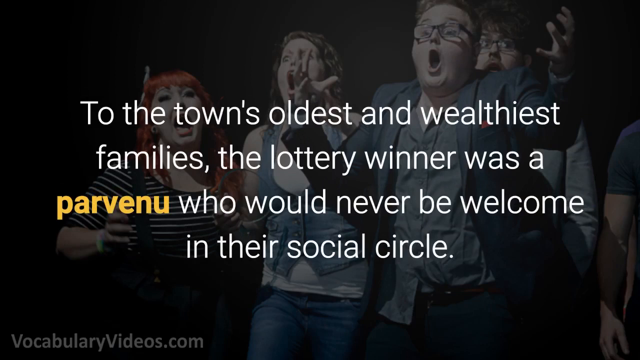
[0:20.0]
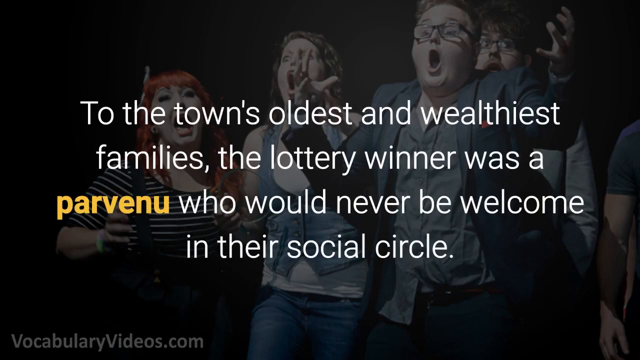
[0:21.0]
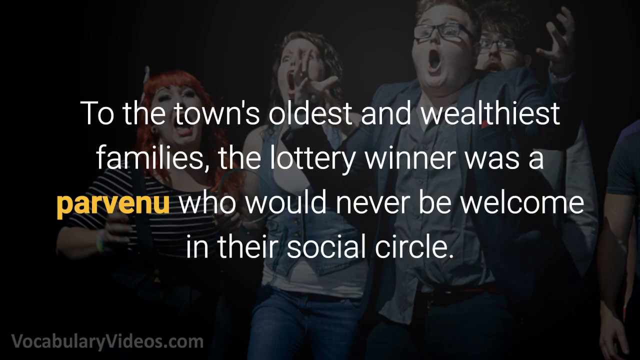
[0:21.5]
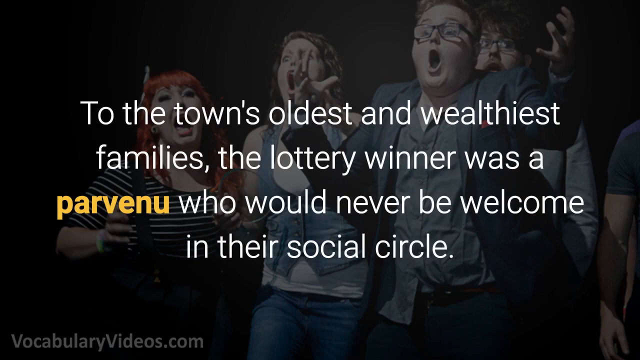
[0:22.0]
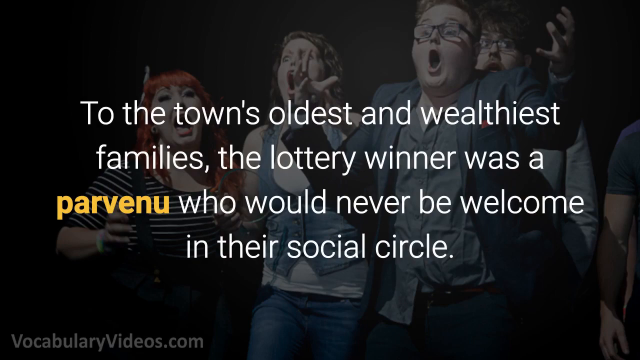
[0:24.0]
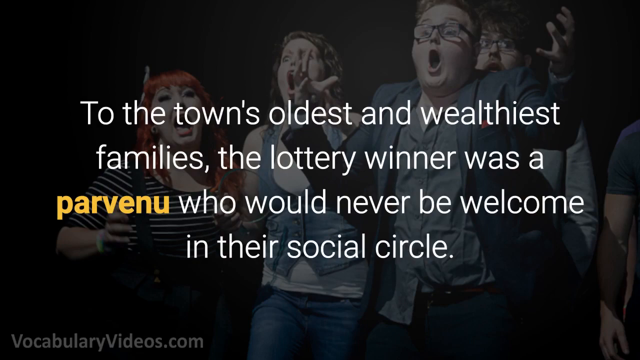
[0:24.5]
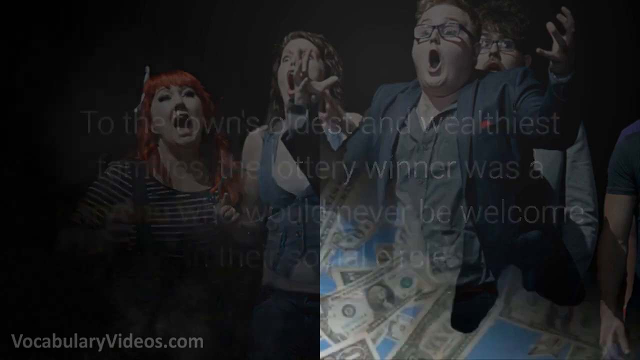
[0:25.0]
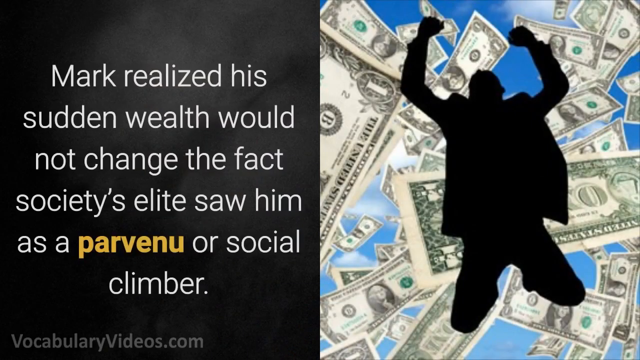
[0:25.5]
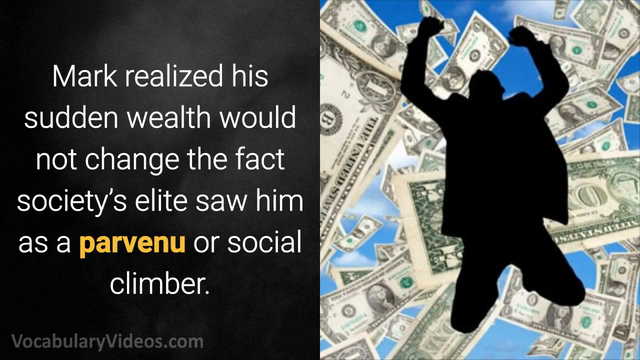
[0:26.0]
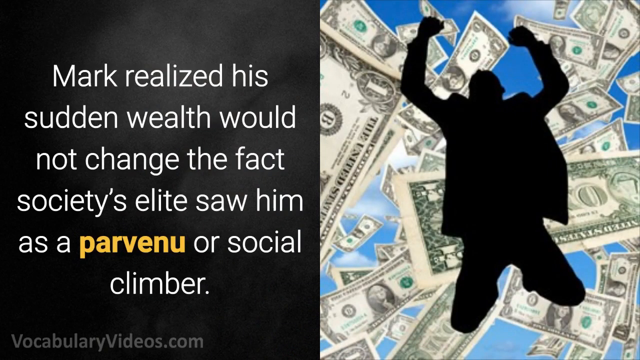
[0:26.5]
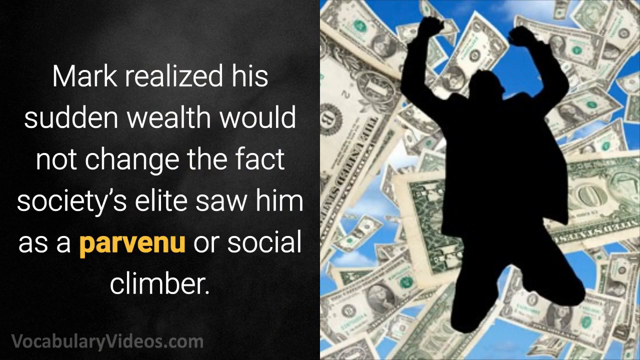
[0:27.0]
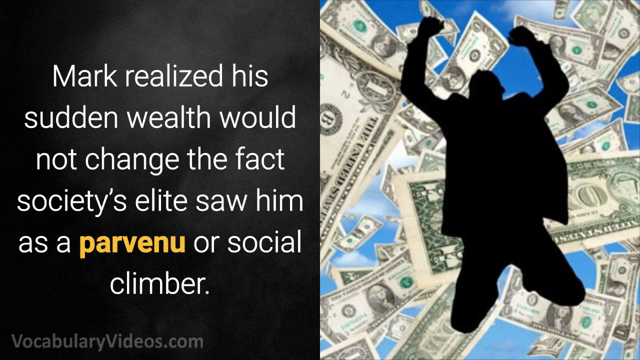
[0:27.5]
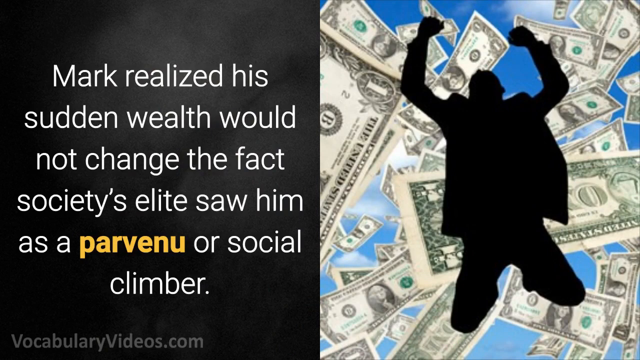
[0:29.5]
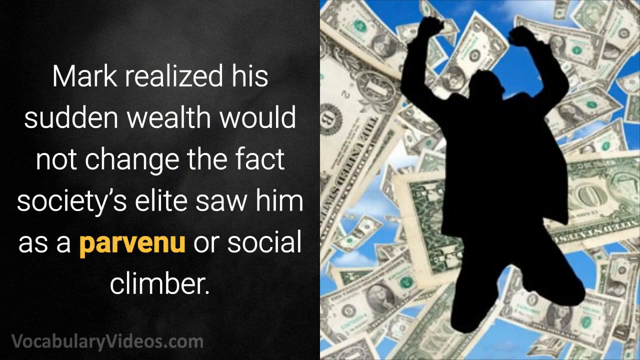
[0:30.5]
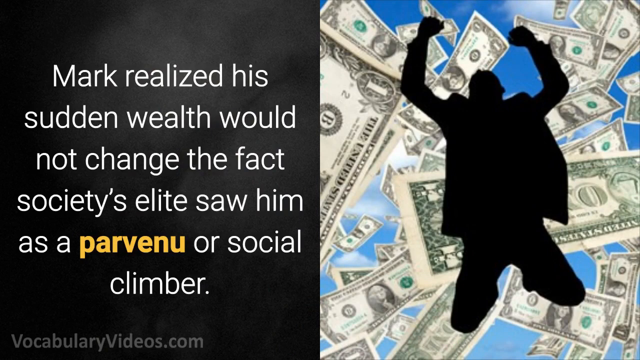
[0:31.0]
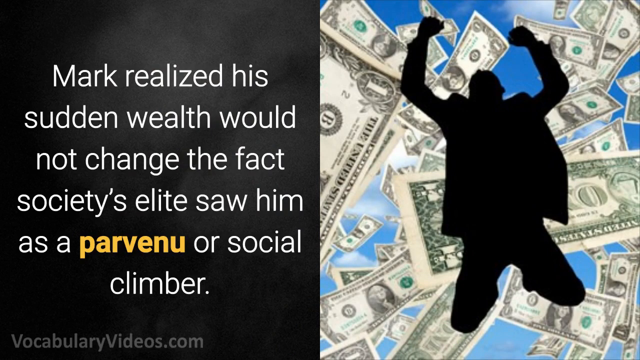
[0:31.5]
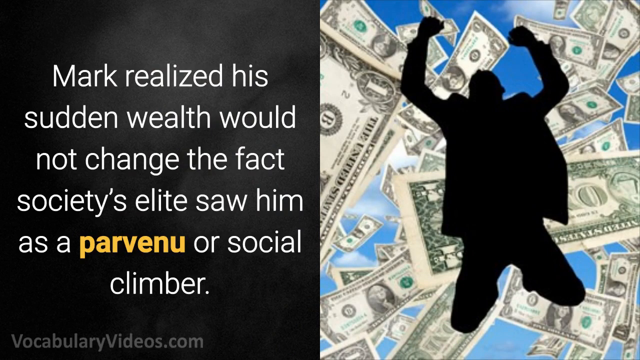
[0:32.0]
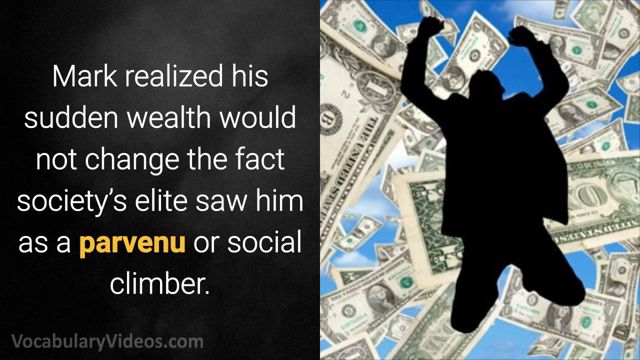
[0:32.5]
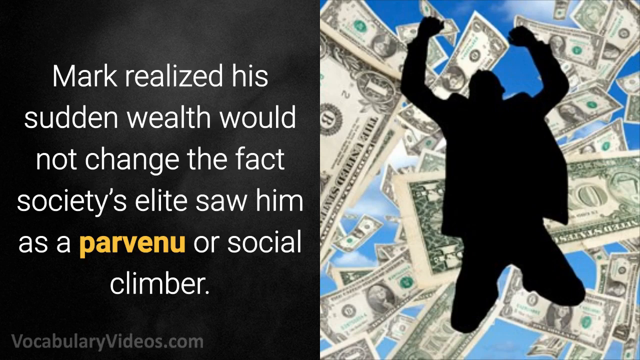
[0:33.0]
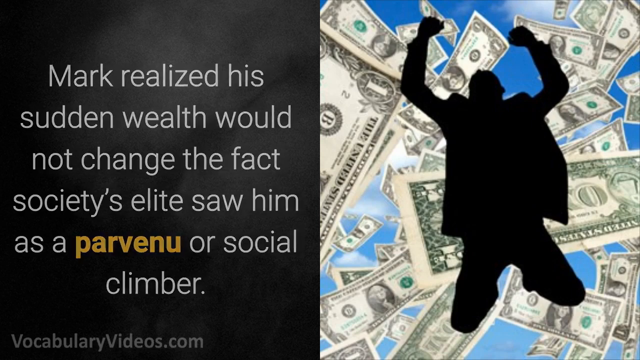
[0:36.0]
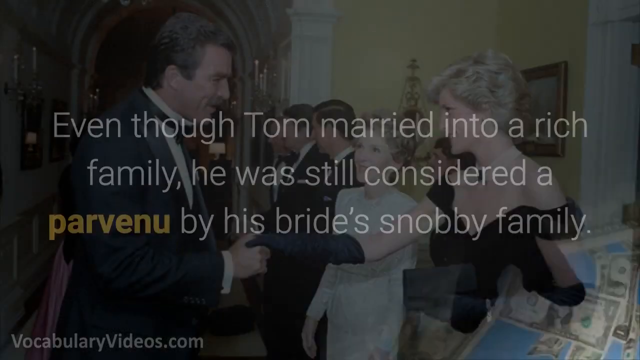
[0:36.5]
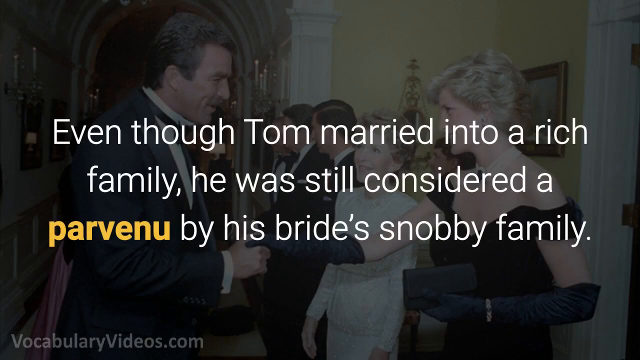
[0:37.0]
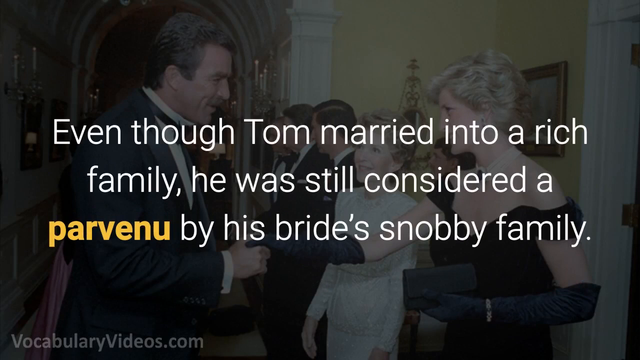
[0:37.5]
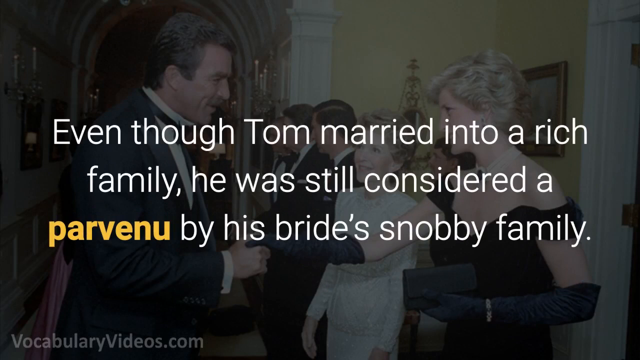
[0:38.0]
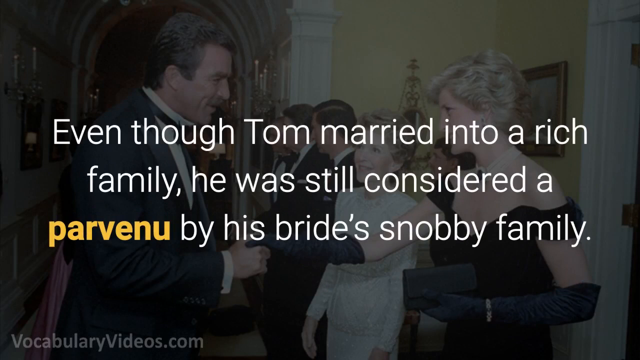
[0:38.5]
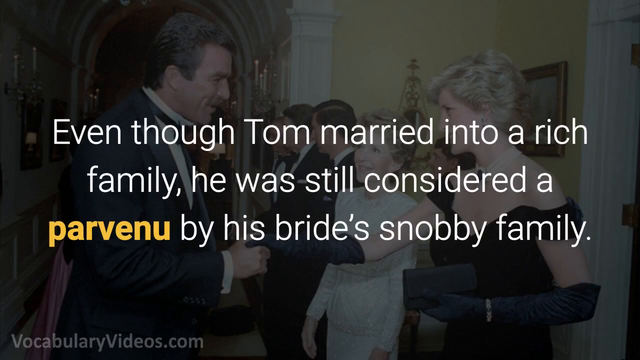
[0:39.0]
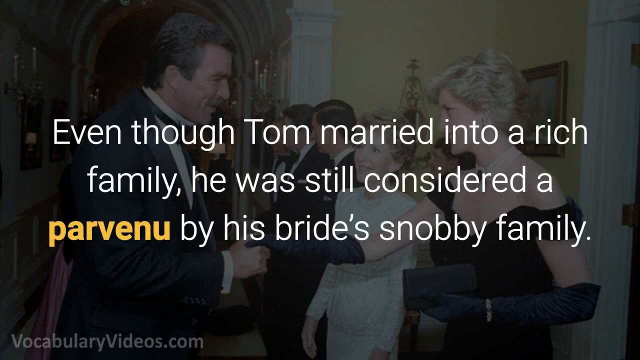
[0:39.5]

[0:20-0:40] The tutorial on what a parvenu is continues, defining it as an individual who moves from a lower economic and social class to a higher one while remaining an outsider. Further example sentences follow: Mark realized his sudden wealth would not change the fact society's elite saw him as a parvenu or social climber; and even though Tom was introduced into a rich family, he was still considered a parvenu by the snobby family.